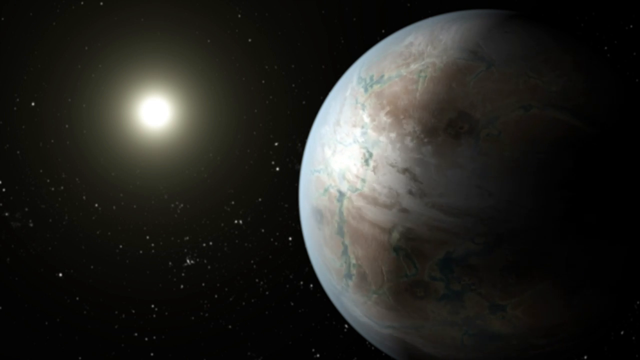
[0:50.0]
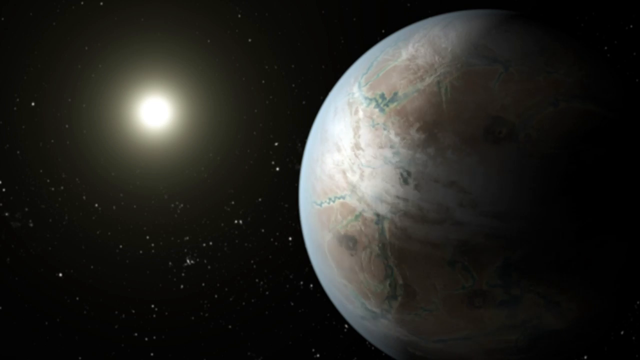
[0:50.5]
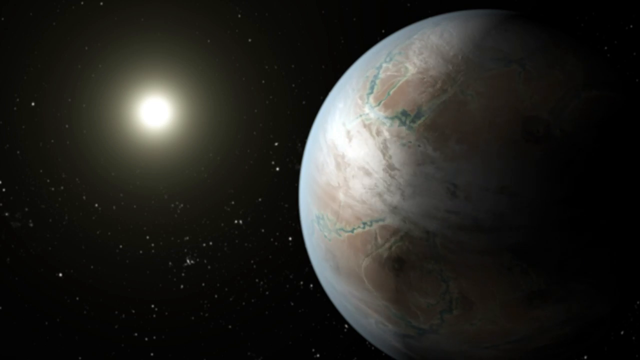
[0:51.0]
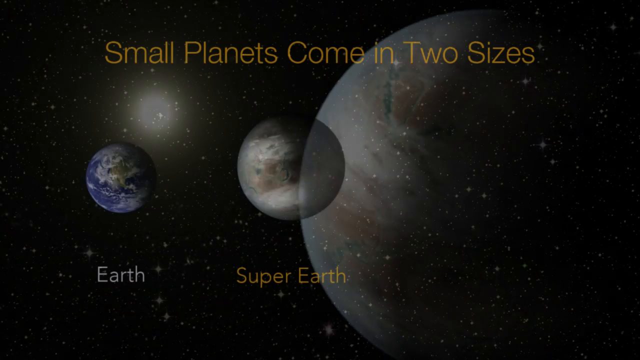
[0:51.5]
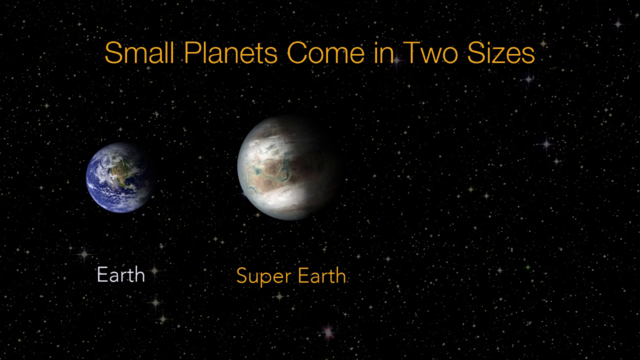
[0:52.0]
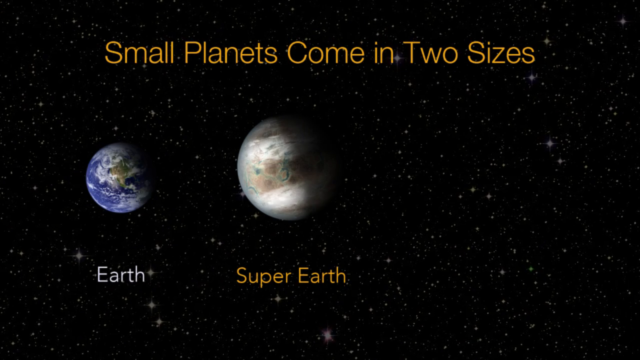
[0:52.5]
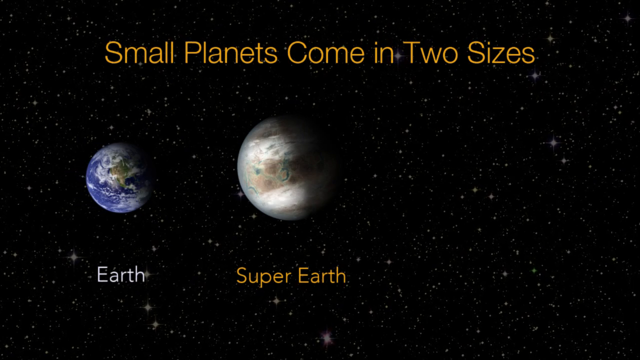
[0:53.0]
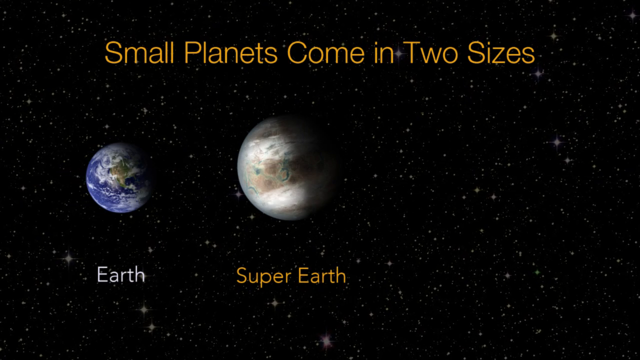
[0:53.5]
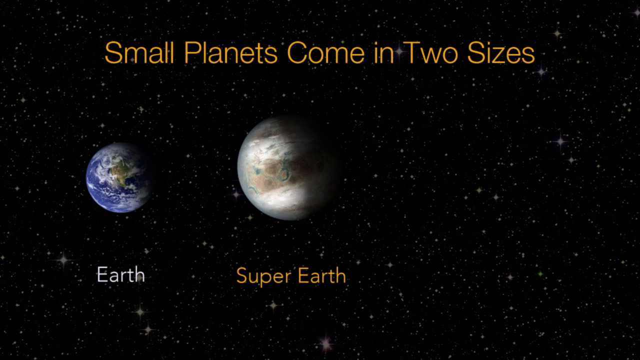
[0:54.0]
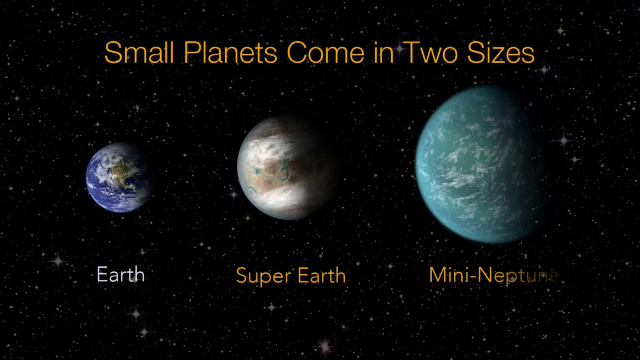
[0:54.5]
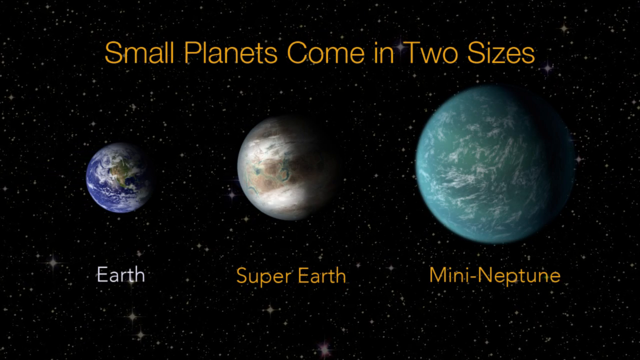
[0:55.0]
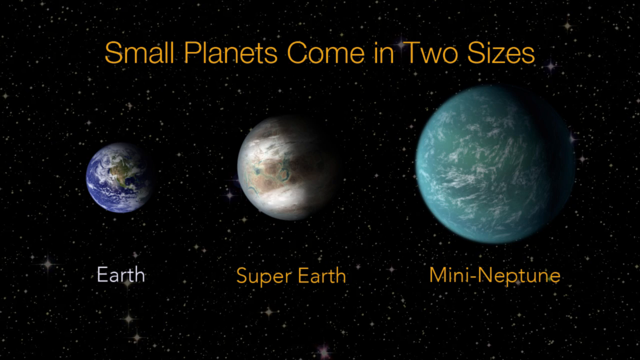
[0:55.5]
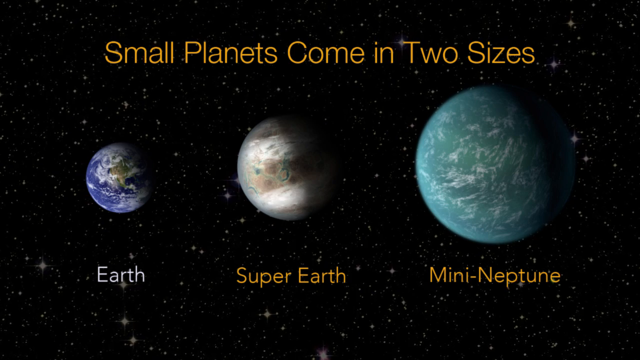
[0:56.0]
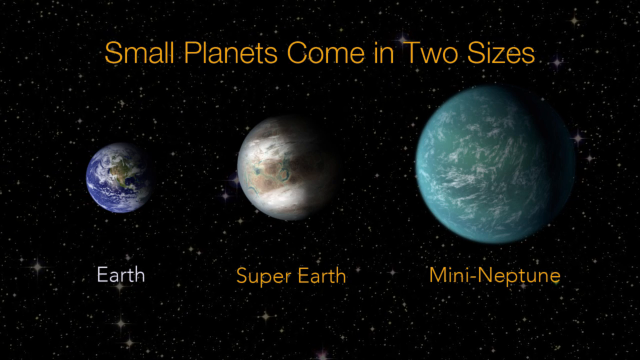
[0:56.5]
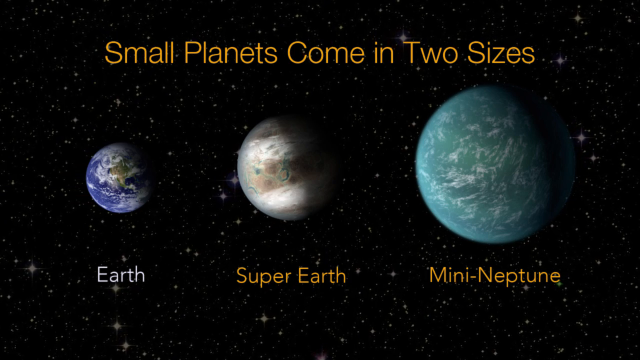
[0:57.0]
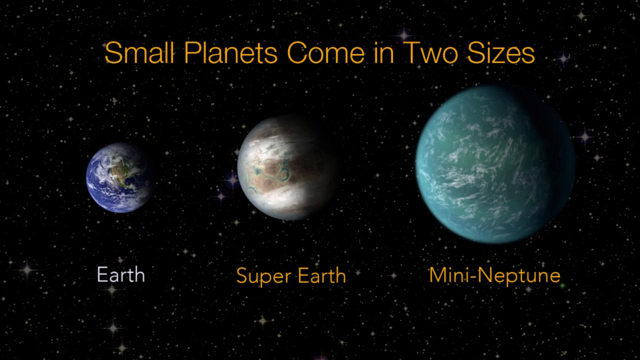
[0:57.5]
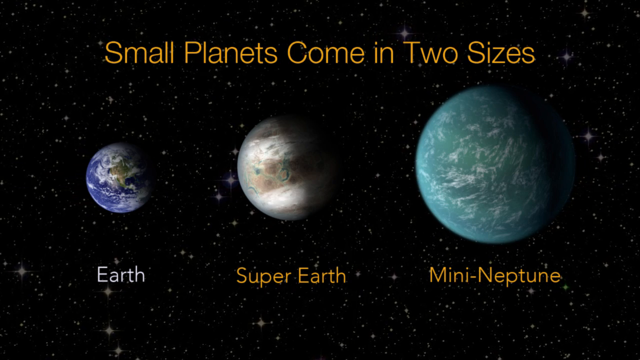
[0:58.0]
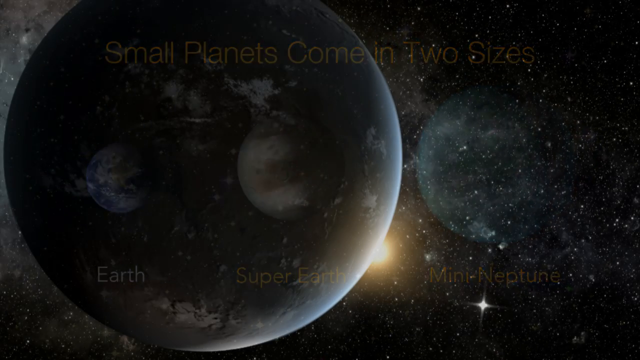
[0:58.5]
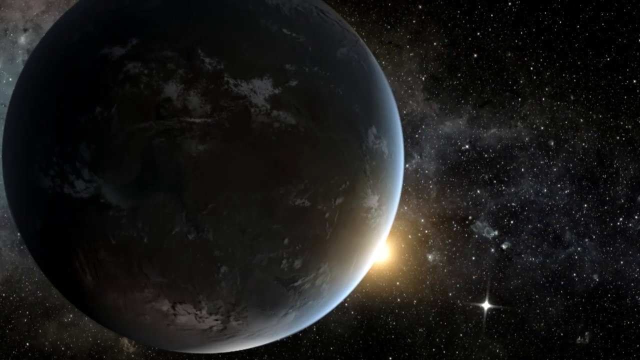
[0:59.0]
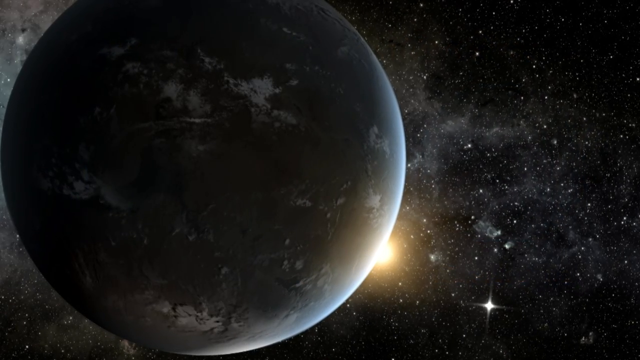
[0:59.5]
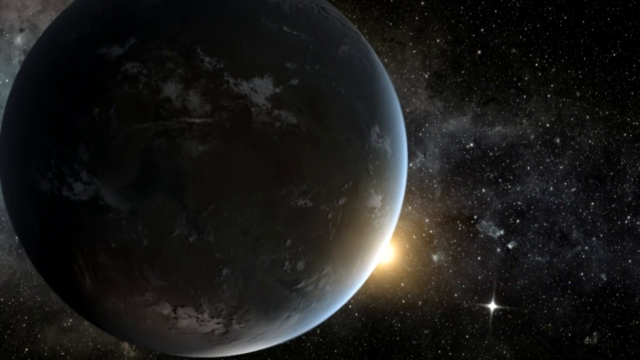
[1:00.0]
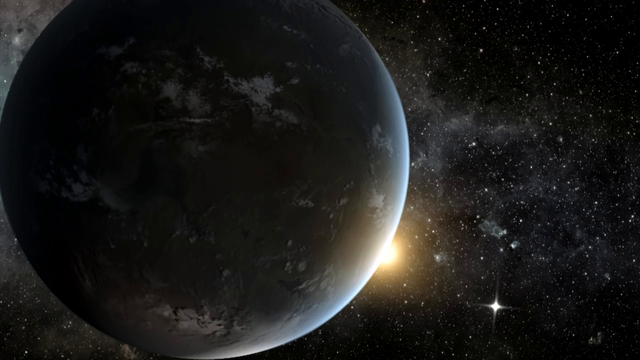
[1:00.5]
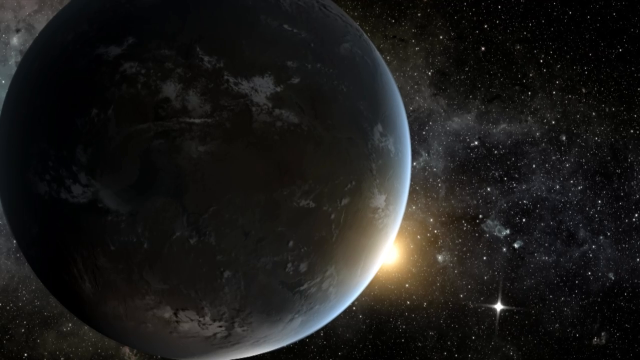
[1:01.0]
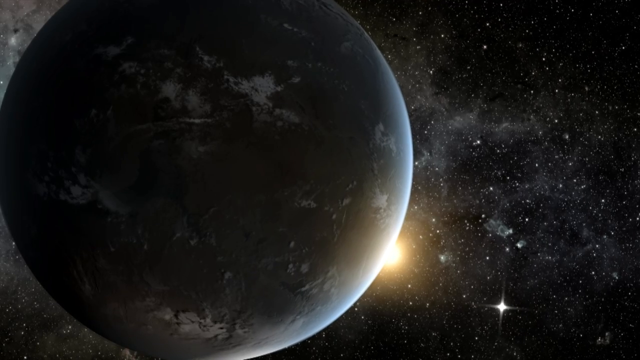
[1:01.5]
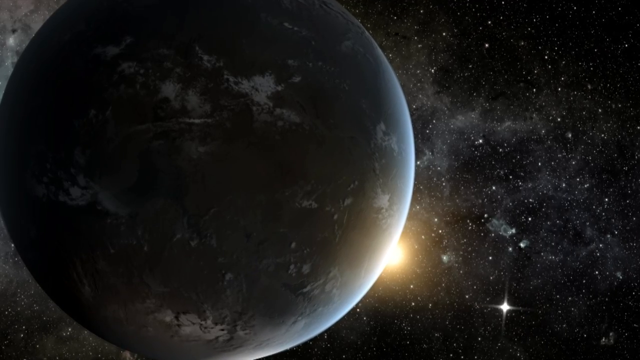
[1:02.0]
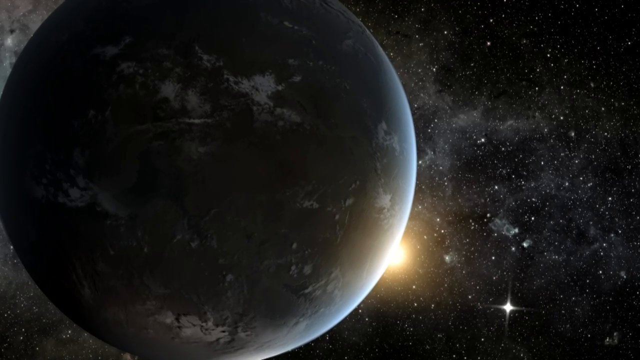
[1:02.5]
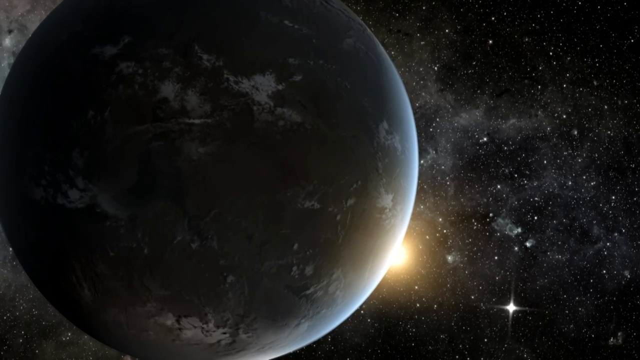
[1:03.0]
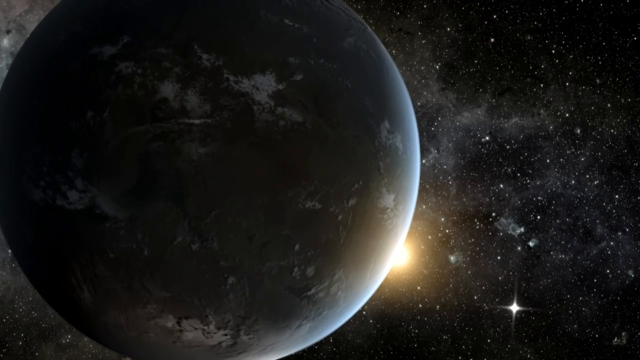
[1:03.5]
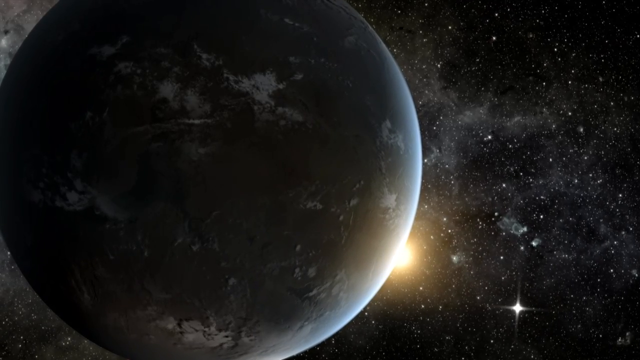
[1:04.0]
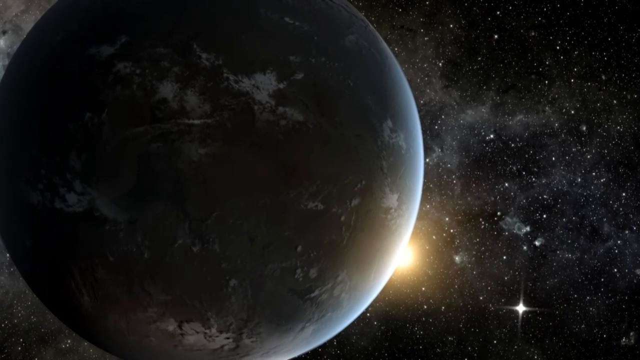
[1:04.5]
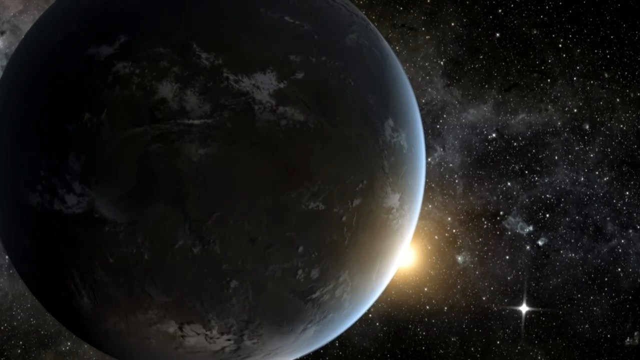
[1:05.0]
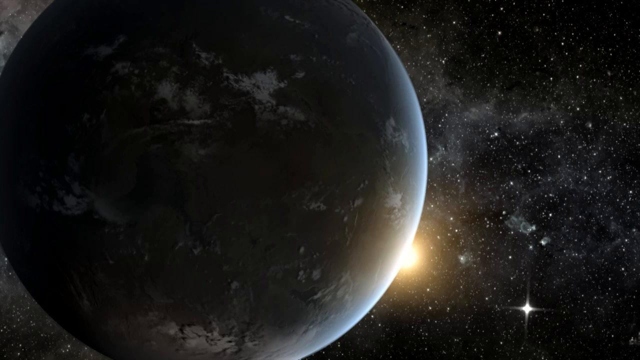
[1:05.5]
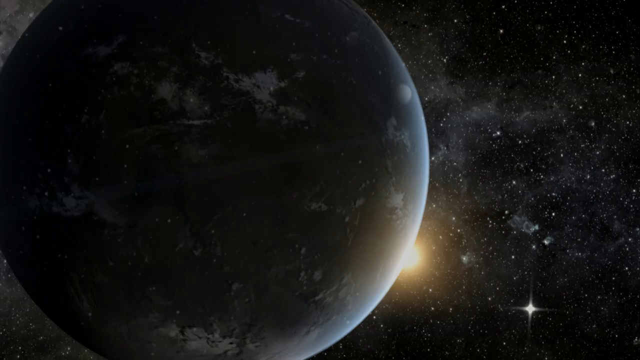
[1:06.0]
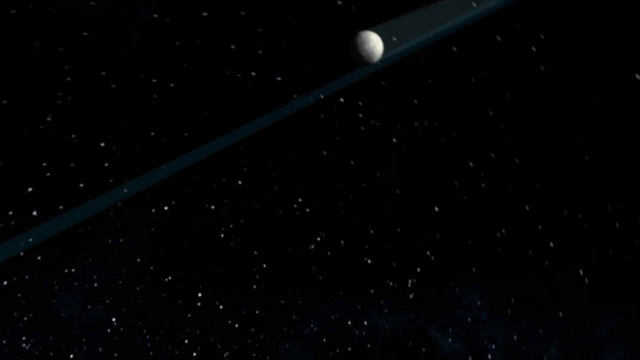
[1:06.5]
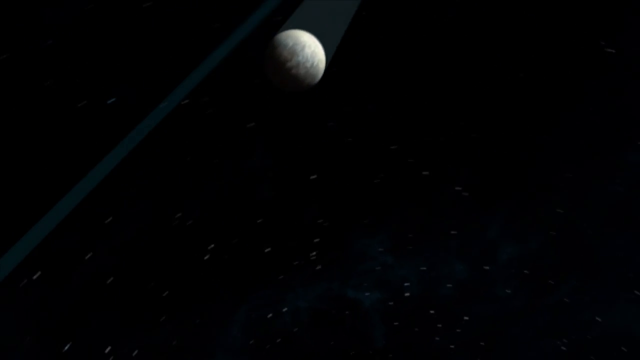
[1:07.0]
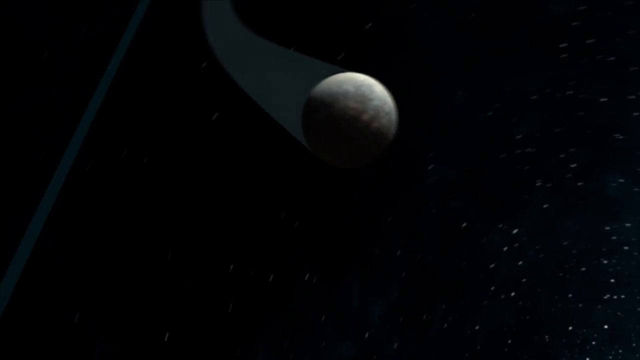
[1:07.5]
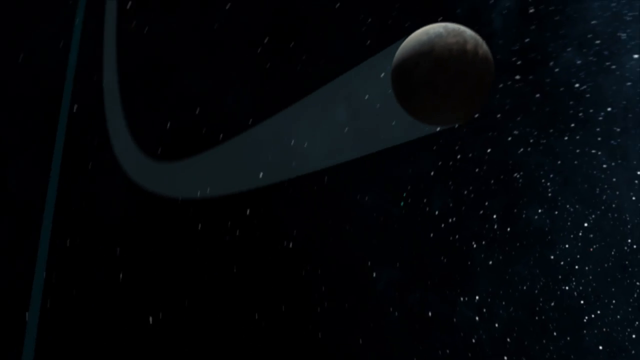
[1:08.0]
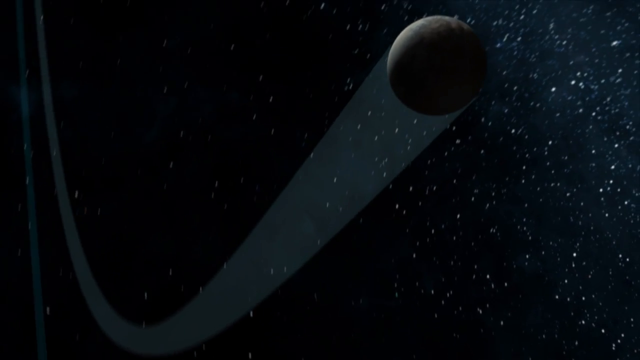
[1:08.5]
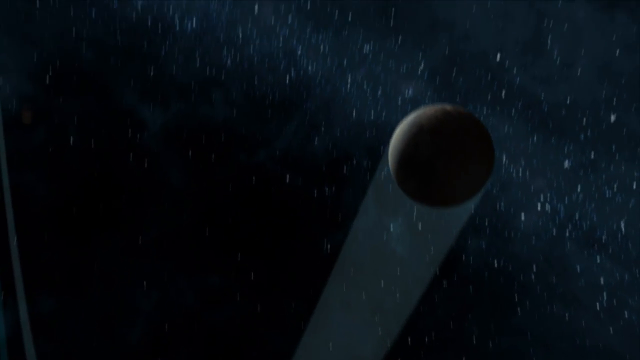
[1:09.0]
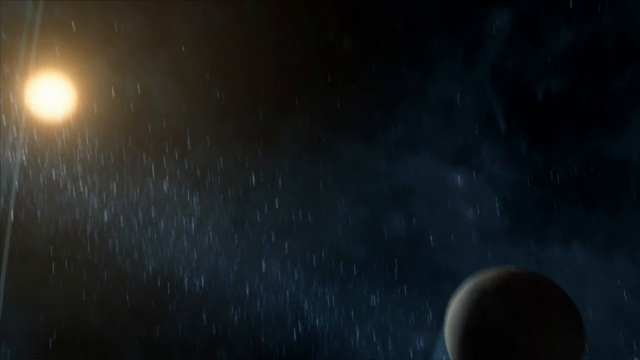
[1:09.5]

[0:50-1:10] A planet spins on the right side of the screen with a sun to the left. The text "small planets come in two sizes" appears in orange at the top of the screen. A planet labeled "Earth" in white text appears, then another planet labeled "Super Earth" in orange text, then a third labeled "Mini Neptune" in orange text, each bigger than the last. The first is a digital image of Earth, the next a planet with kind of white and brown streaks, and the third a blue planet with white streaks of atmosphere, with black space and white stars in the background. Another digital image shows a large planet with a sun behind it on the right, casting light across the surface. Most of the planet is shrouded in darkness, but some white clouds are visible on the surface and in the atmosphere, and the camera slowly rotates and zooms. Another small, round planet hurtles through space, leaving a kind of translucent trail behind it as it soars at a rapid pace, against a black sky with stars scattered around.